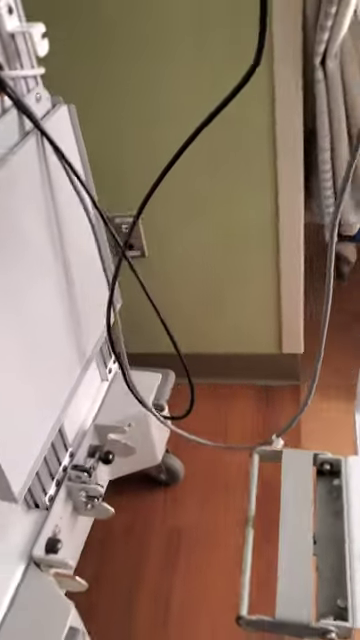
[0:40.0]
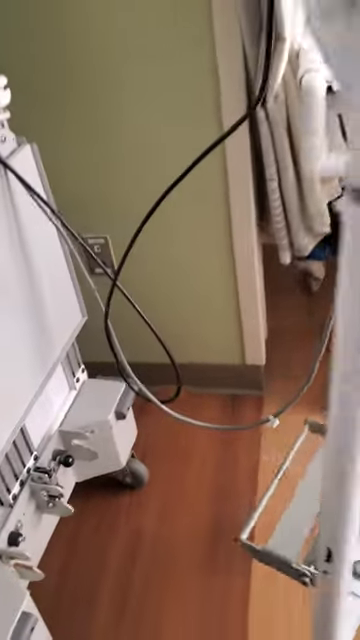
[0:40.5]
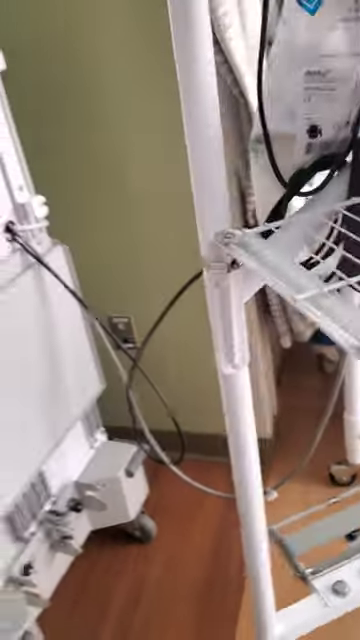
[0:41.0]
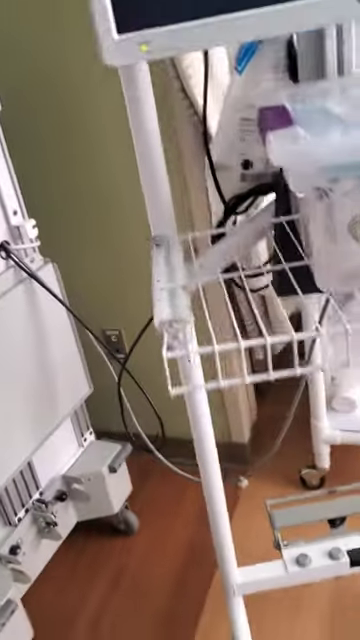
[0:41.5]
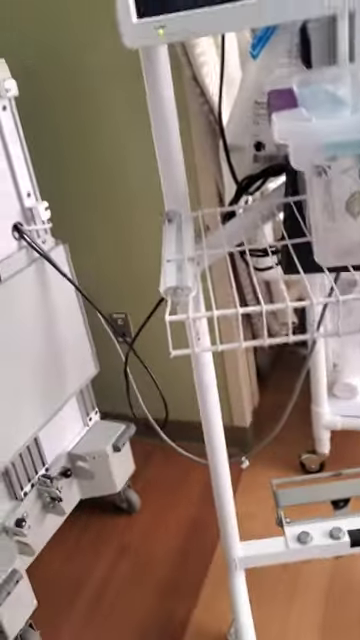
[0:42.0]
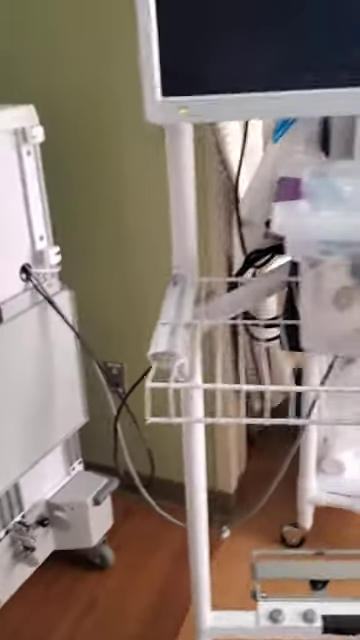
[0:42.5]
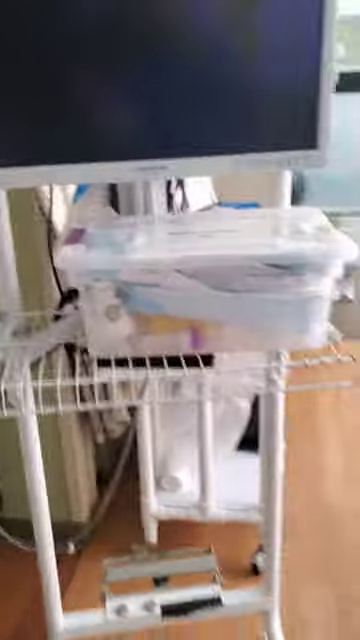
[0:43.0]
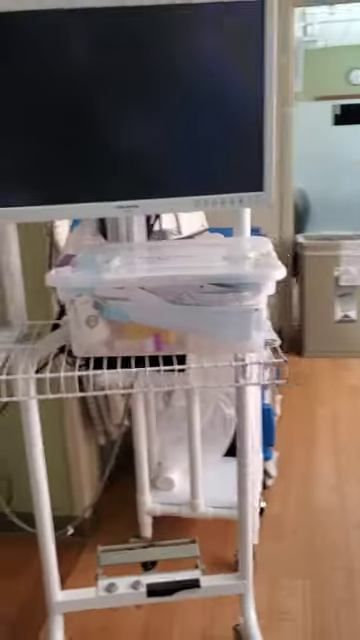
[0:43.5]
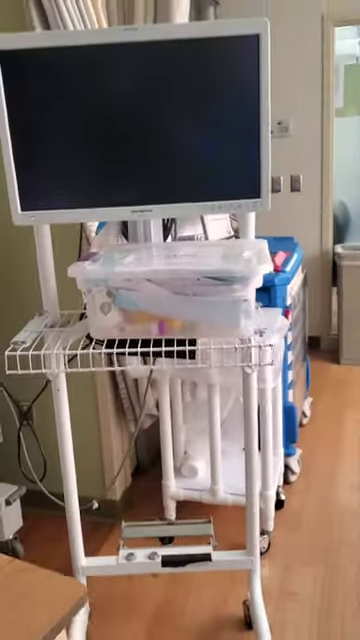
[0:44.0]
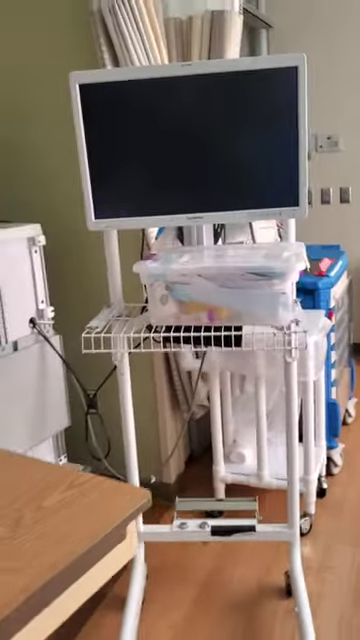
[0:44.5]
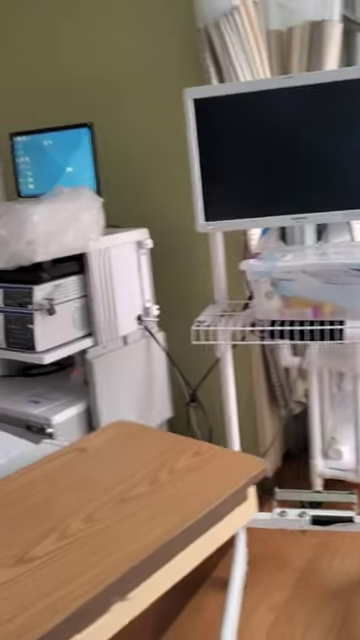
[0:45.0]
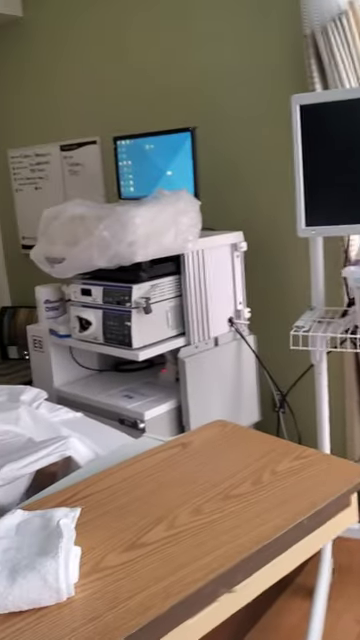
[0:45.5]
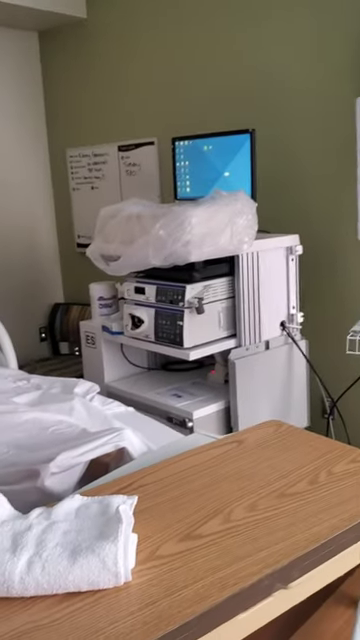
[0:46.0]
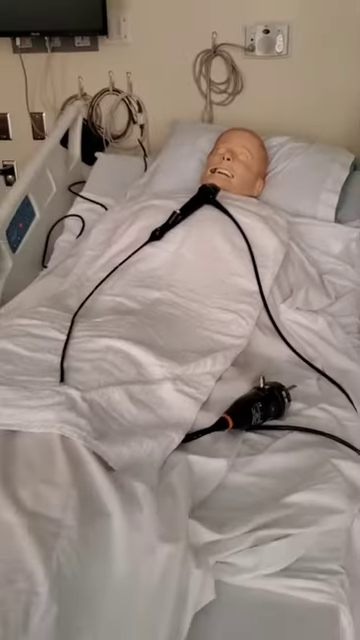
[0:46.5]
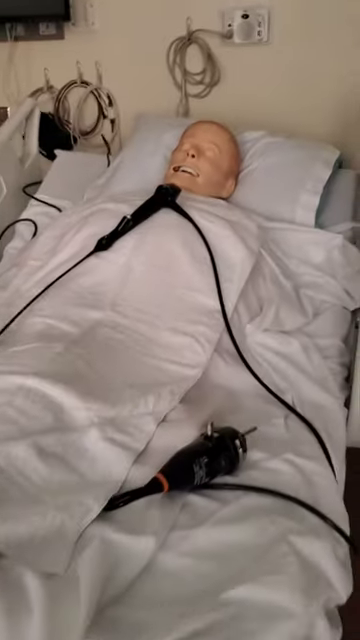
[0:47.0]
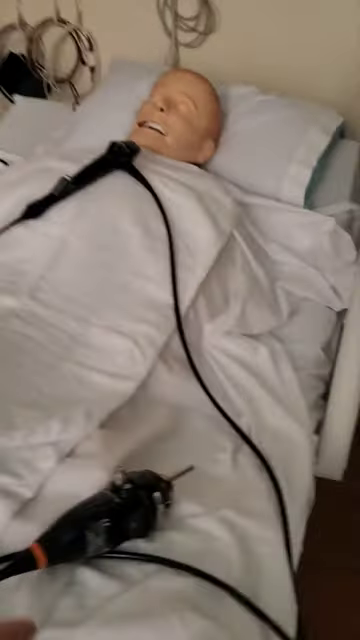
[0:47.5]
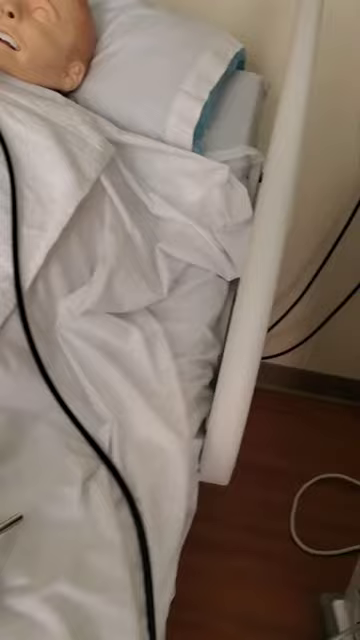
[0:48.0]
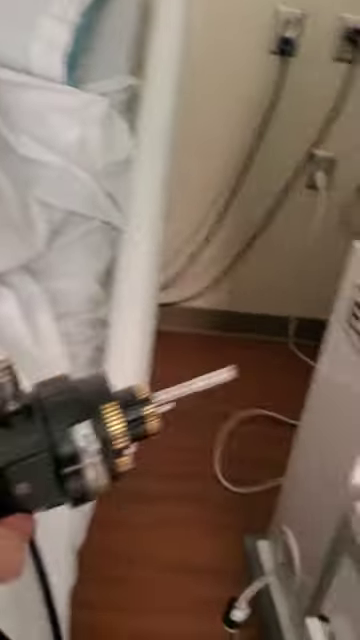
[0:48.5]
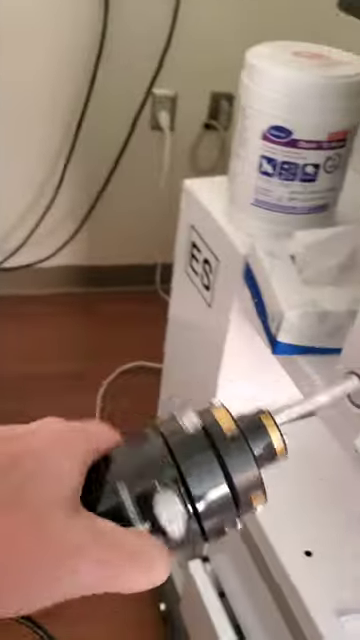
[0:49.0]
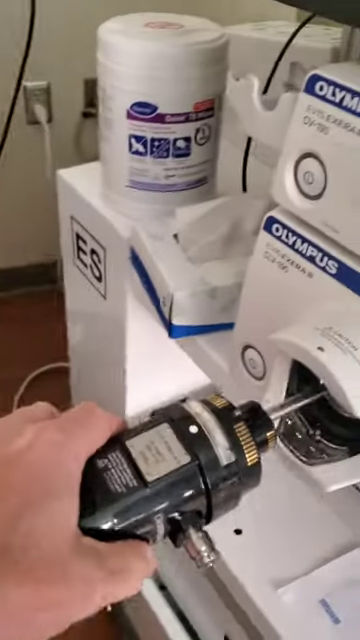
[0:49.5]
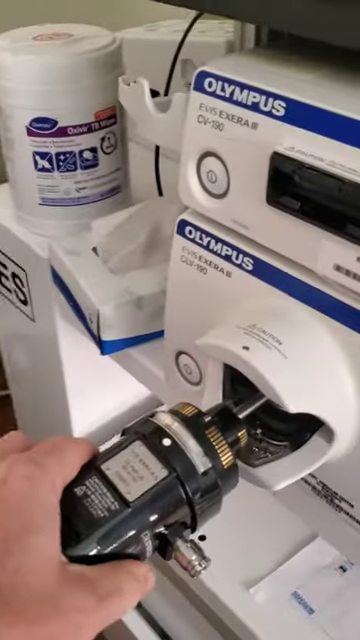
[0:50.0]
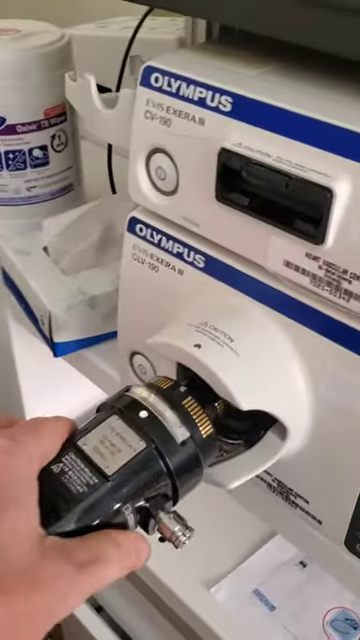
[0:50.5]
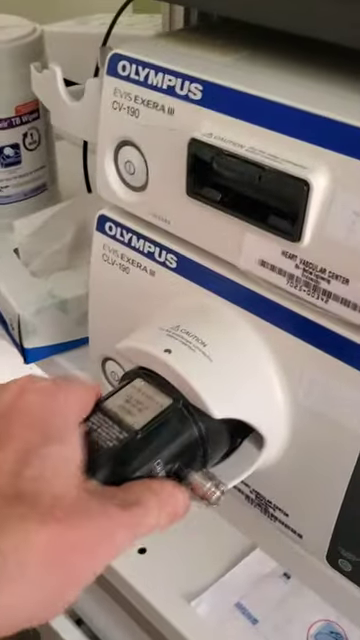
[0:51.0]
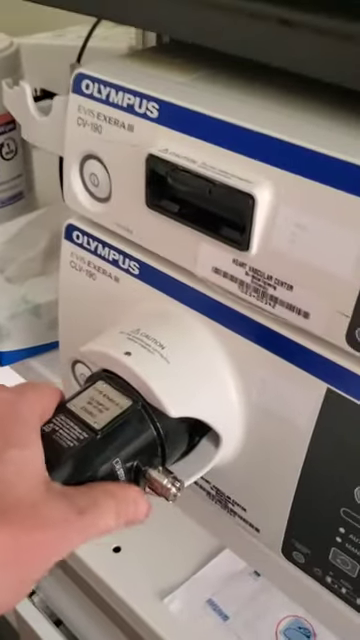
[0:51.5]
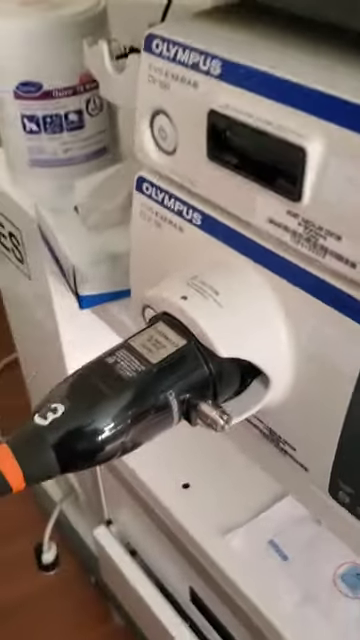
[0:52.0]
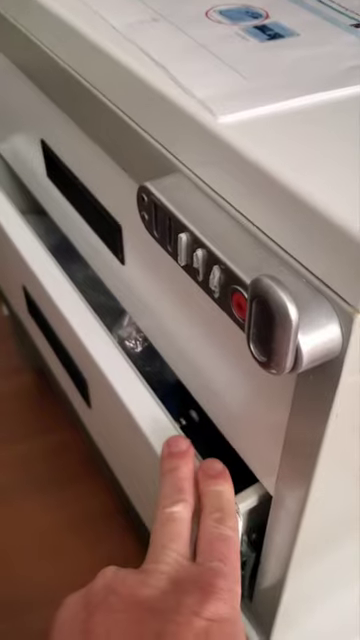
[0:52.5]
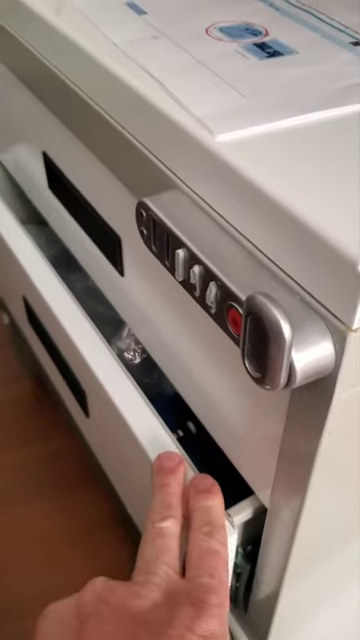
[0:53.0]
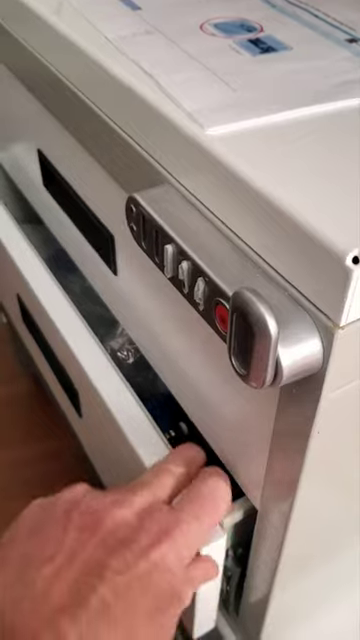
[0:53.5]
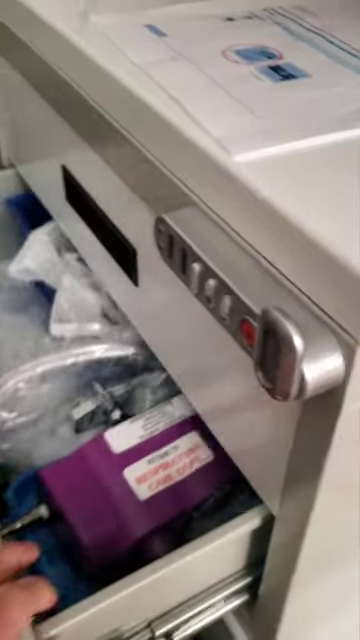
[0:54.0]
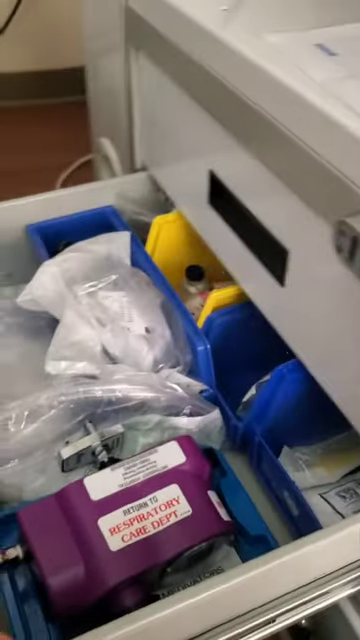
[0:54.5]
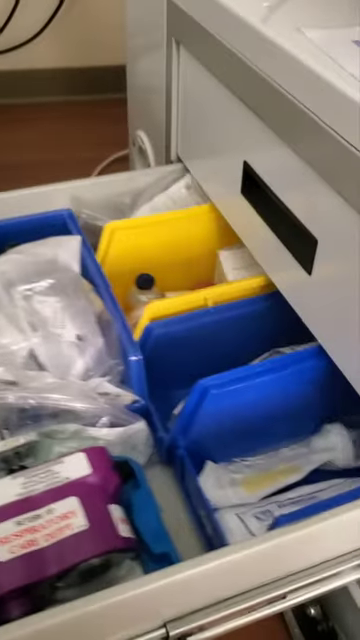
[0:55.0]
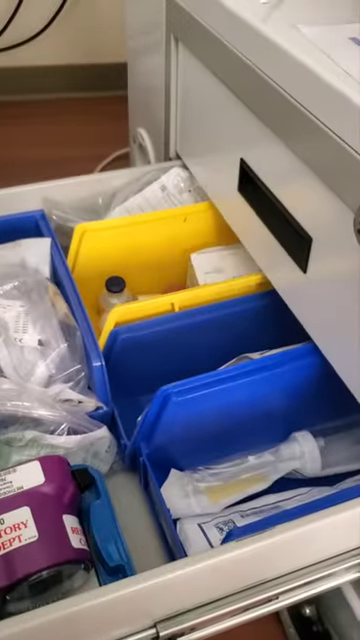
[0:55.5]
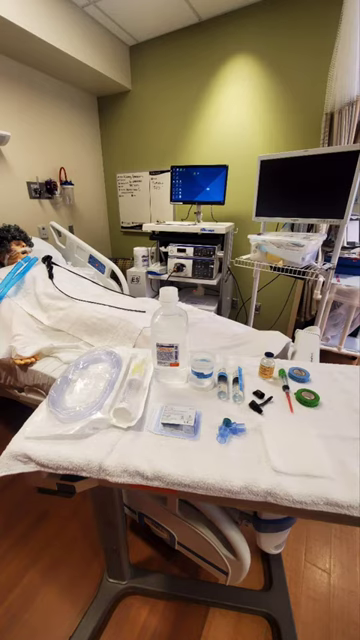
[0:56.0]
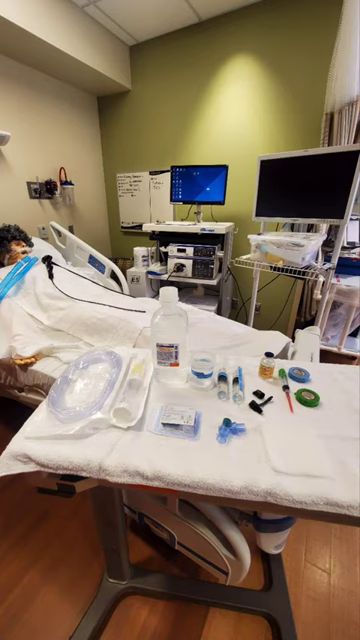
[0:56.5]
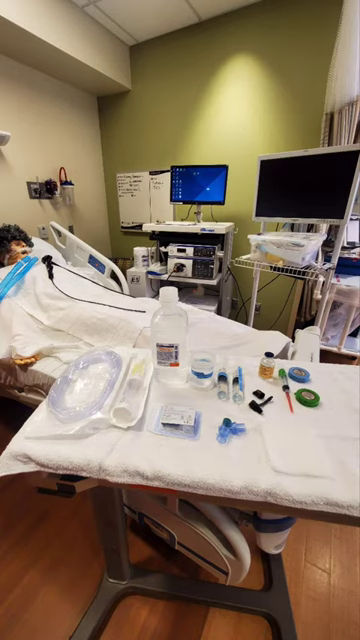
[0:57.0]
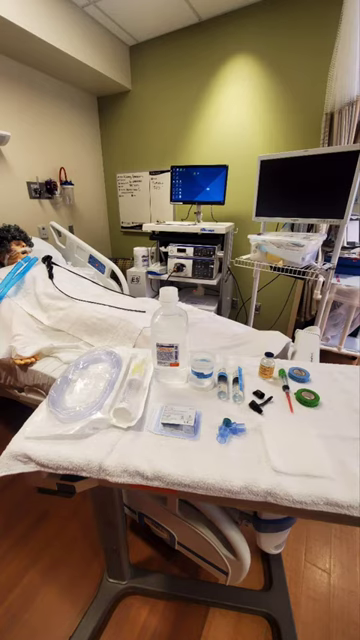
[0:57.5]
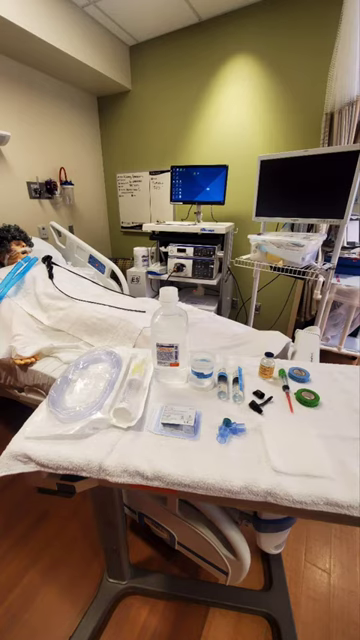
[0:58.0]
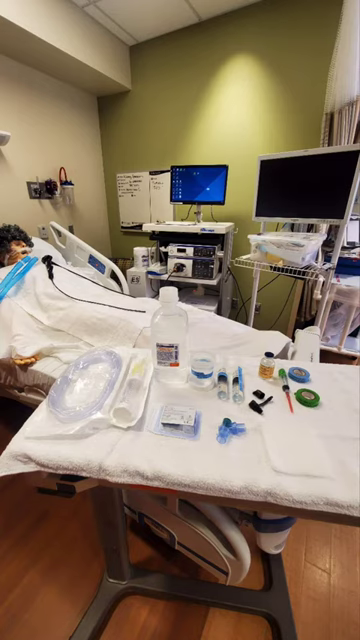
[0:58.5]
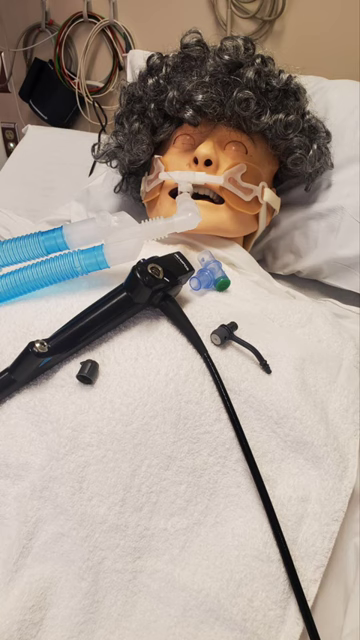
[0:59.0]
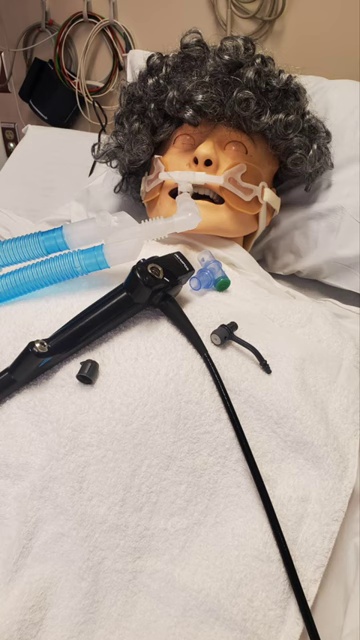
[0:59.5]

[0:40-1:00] The focus is on the detachment of the screen from the cart. The person completely separates the TV screen from the cart and turns it toward a pretend patient, a fake mannequin lying in the bed. The person connects the long black handheld device to some type of power source, which has a name in blue that says "Olympic." The device looks like it could possibly be used on patients to intubate them or maybe to suction out fluids. The device is laid on the chest of the mannequin lying on the bed. Other things in the room are around the fake person, and on the table there are different types of medical supplies.